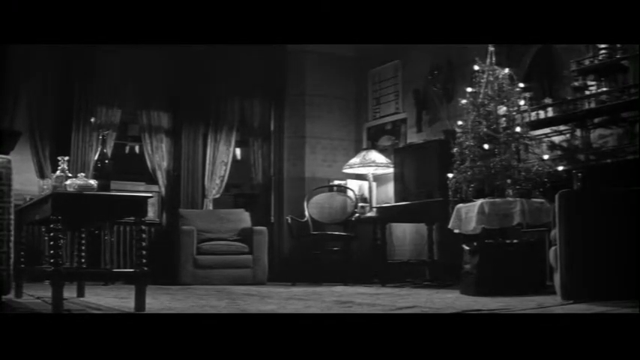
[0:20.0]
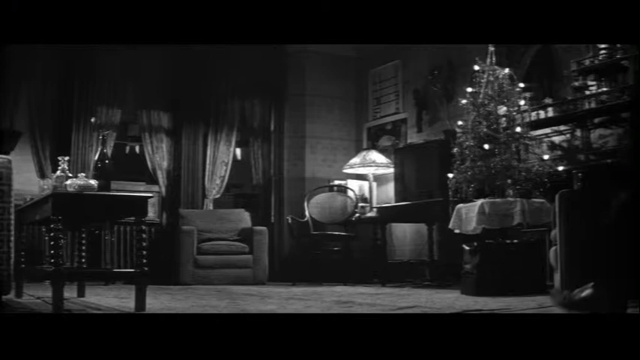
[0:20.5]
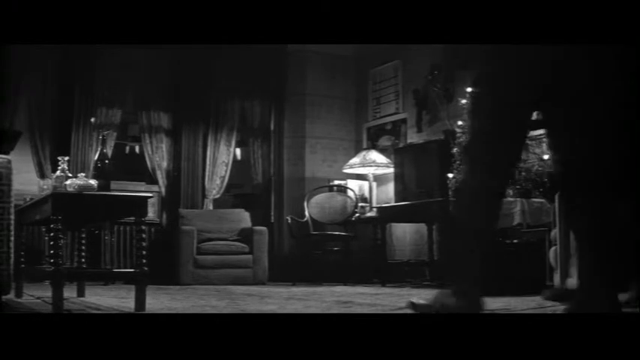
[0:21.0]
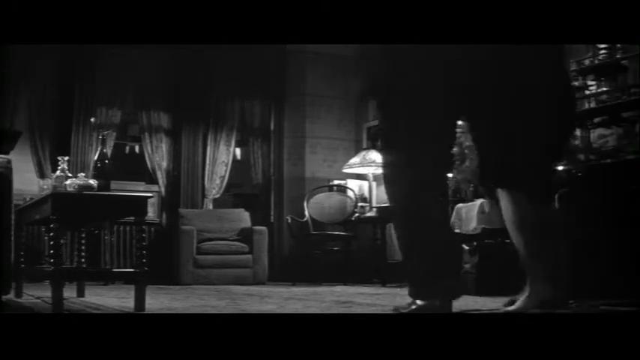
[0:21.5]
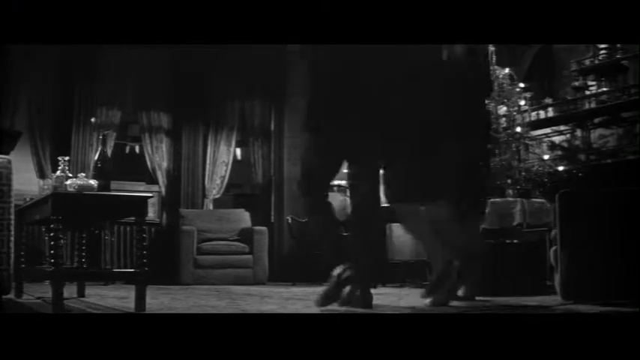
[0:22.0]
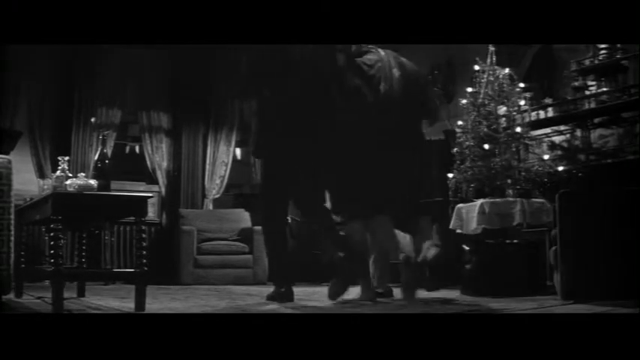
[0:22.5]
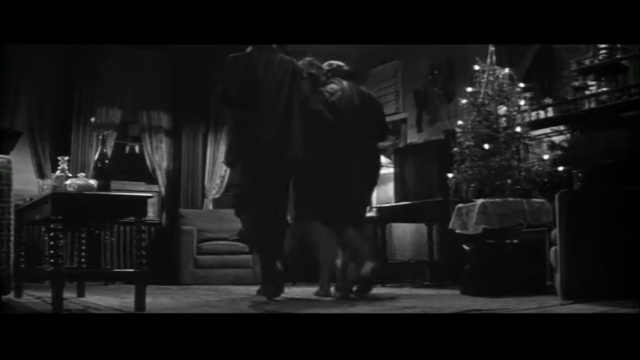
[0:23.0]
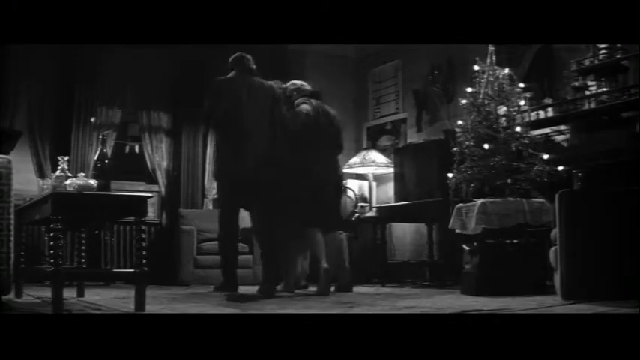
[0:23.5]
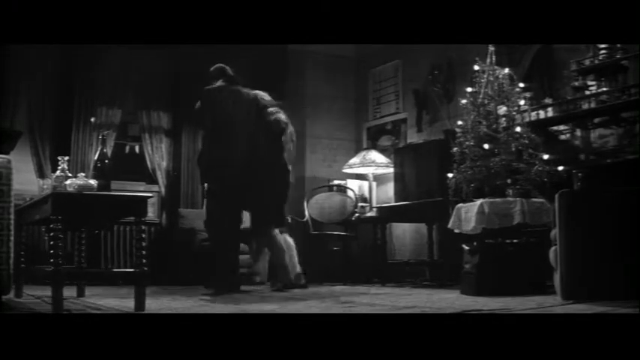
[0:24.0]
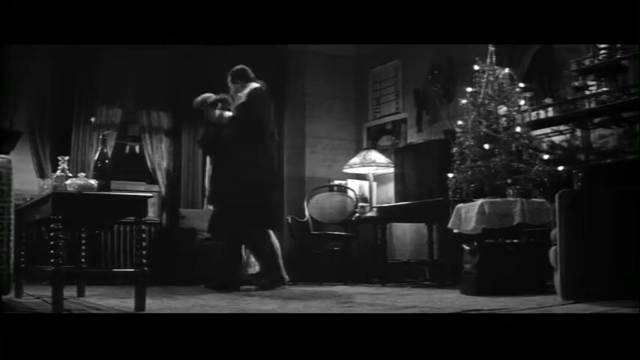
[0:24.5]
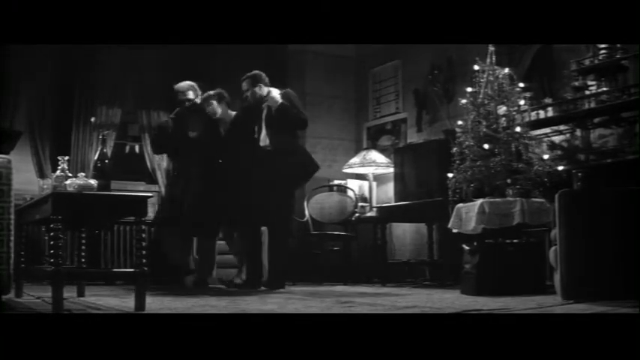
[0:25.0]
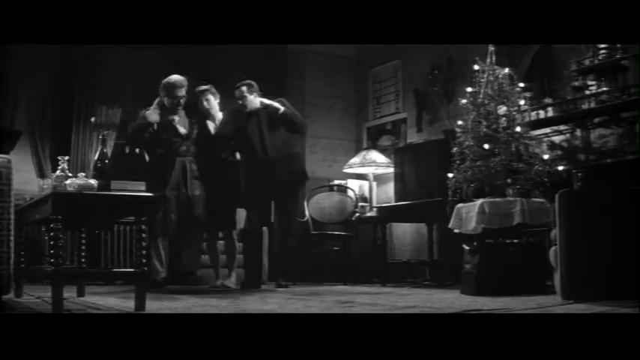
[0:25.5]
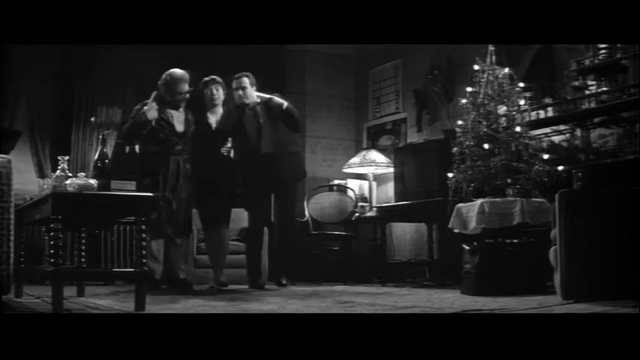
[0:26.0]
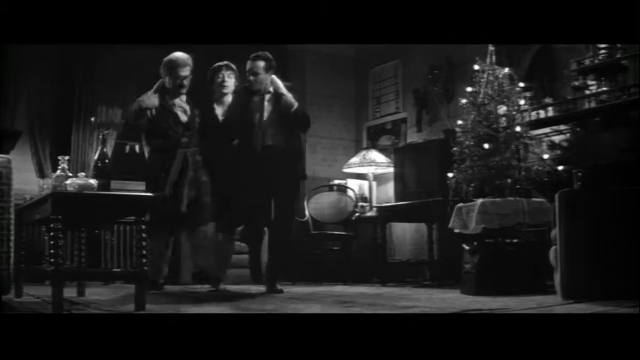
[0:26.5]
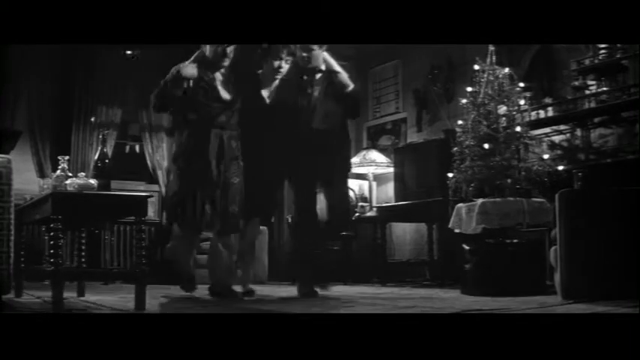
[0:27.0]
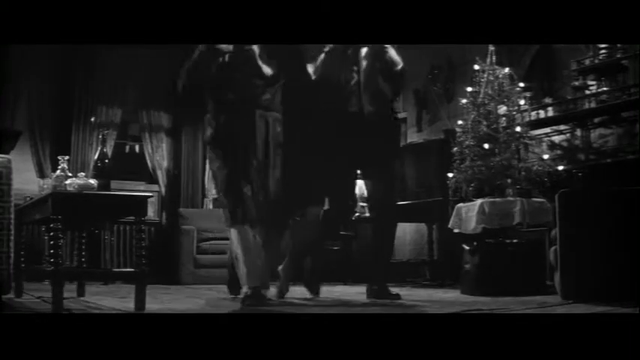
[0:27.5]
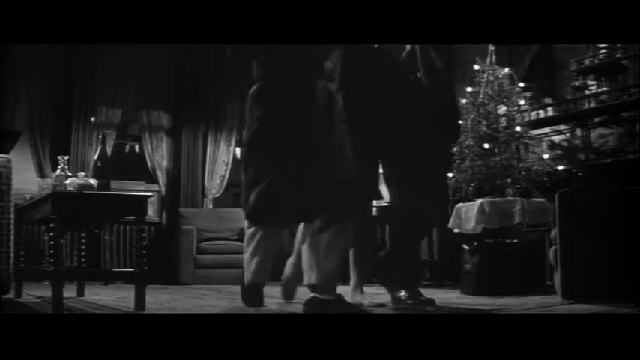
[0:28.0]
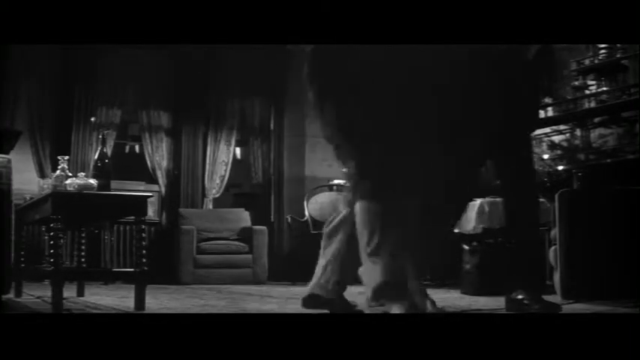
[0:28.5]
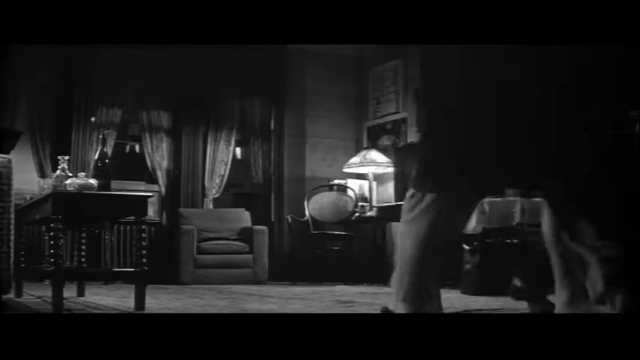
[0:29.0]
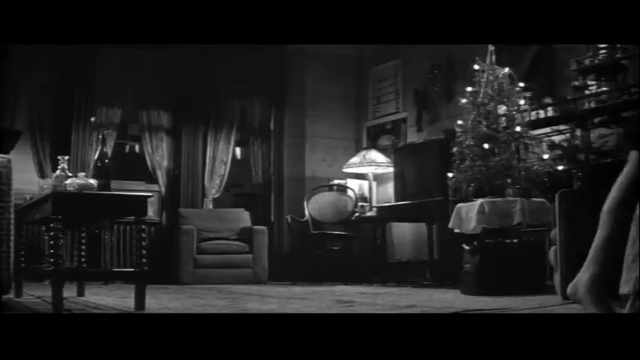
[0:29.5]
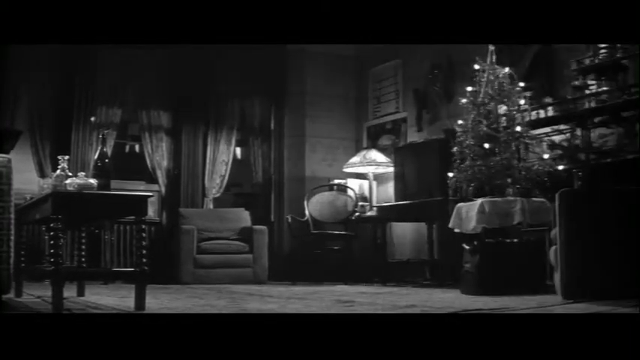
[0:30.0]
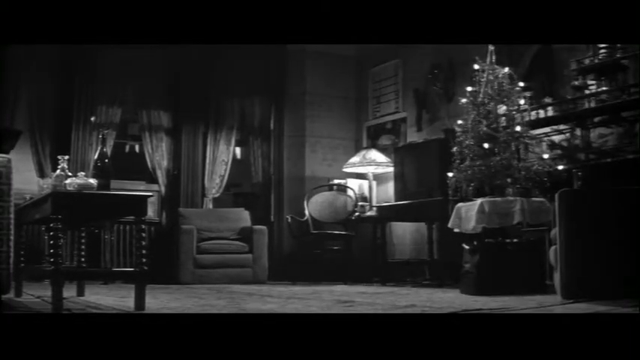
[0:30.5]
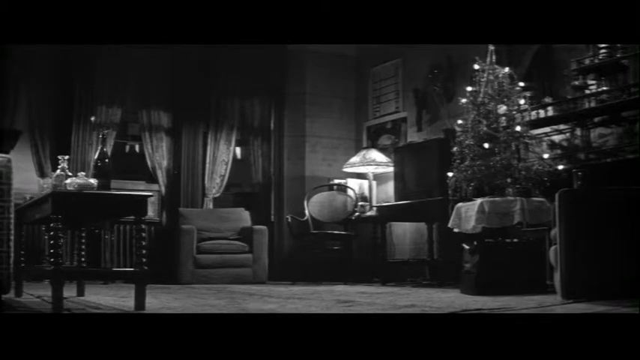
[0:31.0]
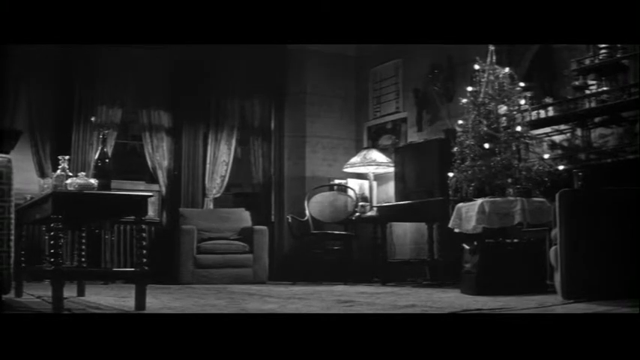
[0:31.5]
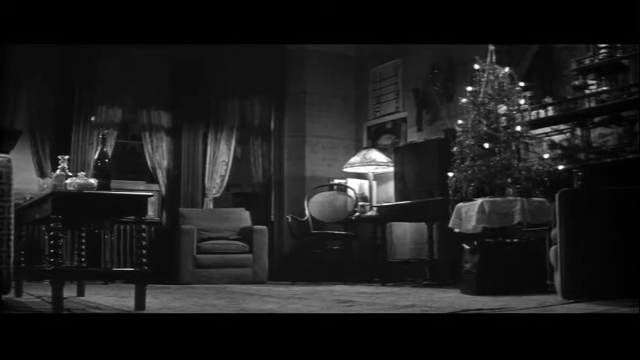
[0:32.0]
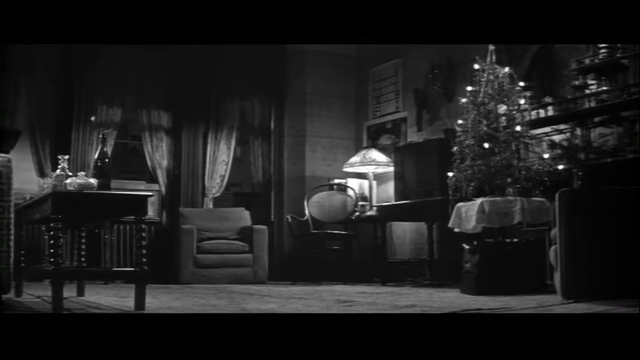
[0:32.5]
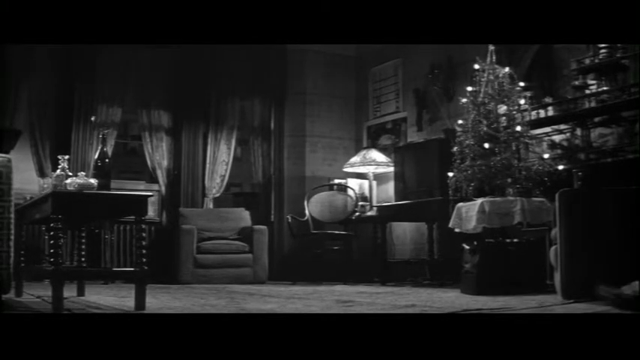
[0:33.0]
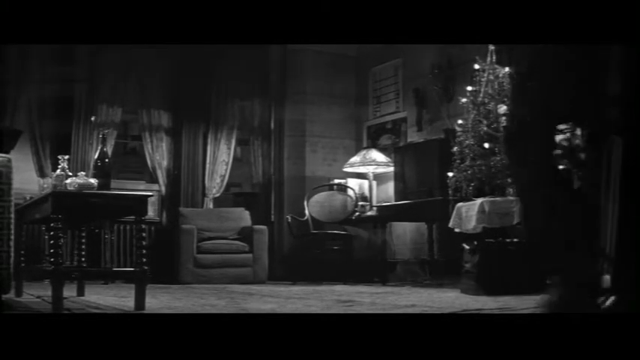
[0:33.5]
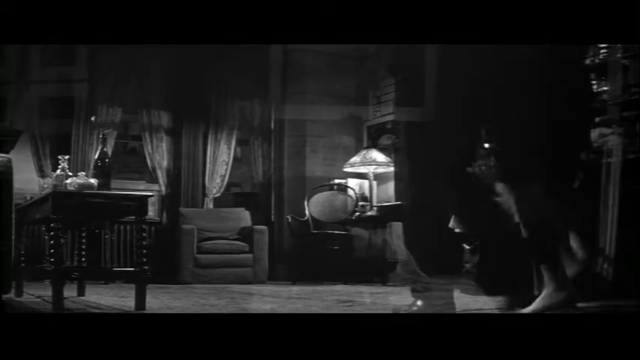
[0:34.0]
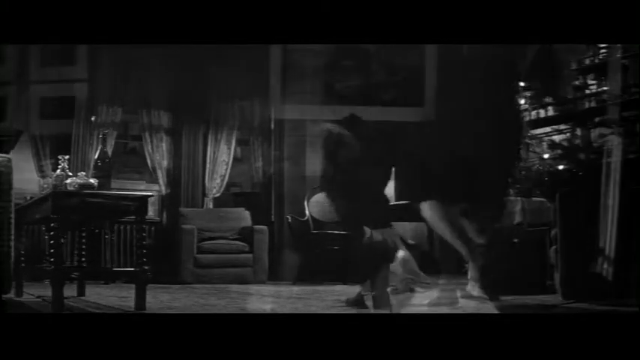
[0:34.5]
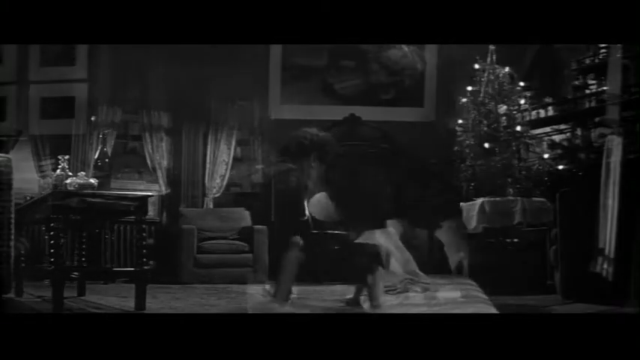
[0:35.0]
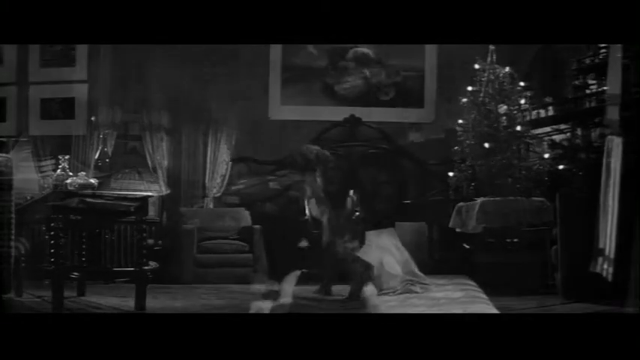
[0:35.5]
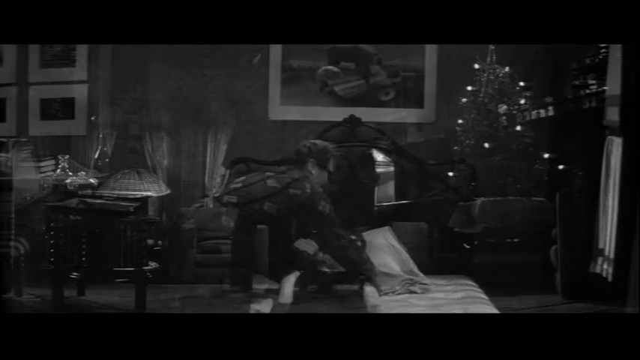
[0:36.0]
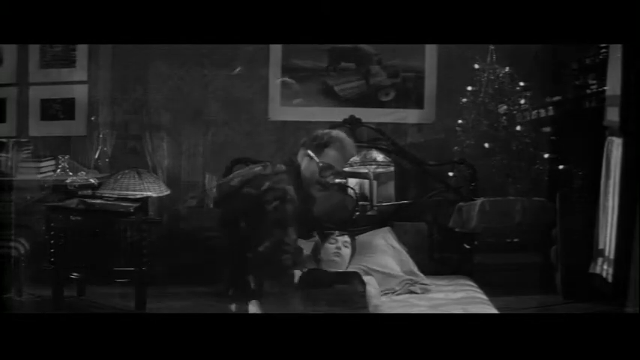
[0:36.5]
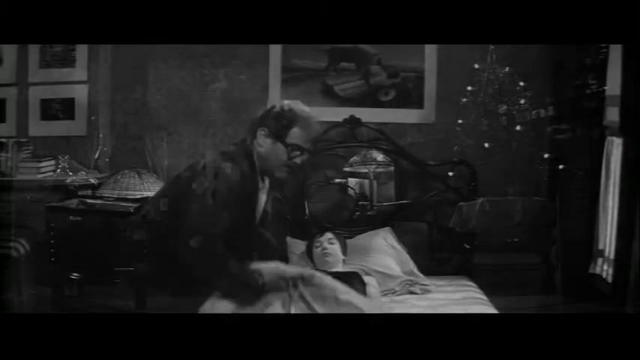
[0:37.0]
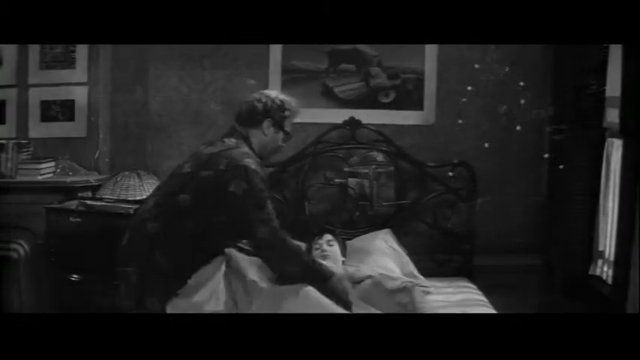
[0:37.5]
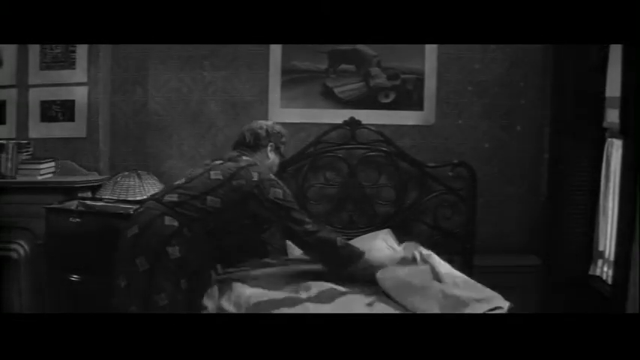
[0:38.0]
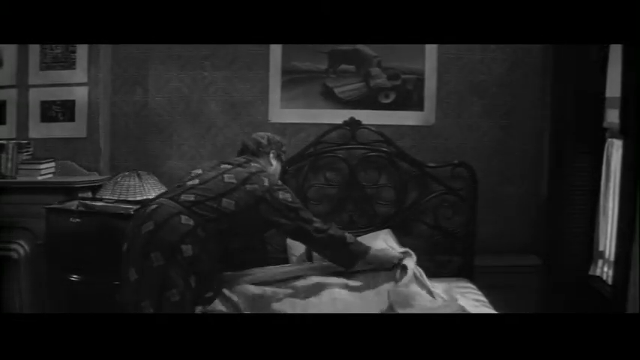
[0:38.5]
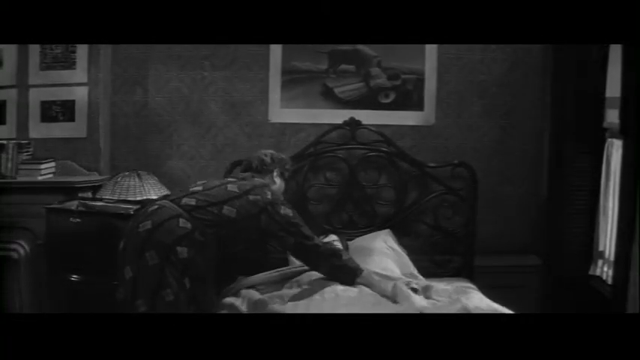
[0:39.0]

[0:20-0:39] The black and white film shows the living room, with a couch, a coffee table, a Christmas tree, some chairs, a TV, and the windows and curtains. The characters come back on screen: the older man, apparently the woman's father, dressed in sleeping clothes, pajamas and a robe; the drunk woman in the middle; and the man in the suit. The two men support her weight and walk with her, seemingly to sober her up. She starts to walk properly on her own legs, as the sobering up appears to be working, and they come back onto the screen. The scene transitions to the woman's bedroom, where the man, apparently her father, lays her down and puts her to sleep, covering her with the blanket and fixing it. The bed frame and the window are visible in the room, and she is fast asleep.